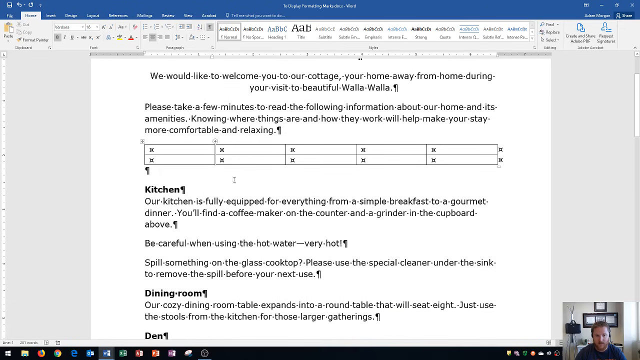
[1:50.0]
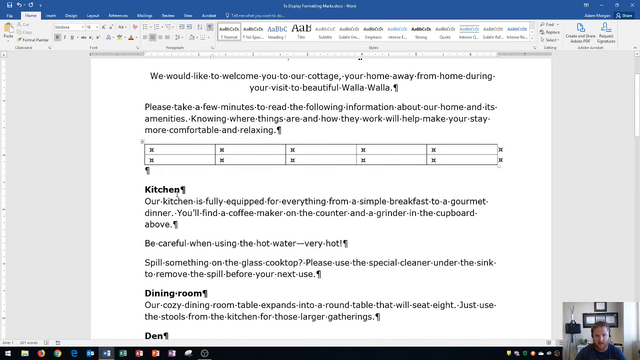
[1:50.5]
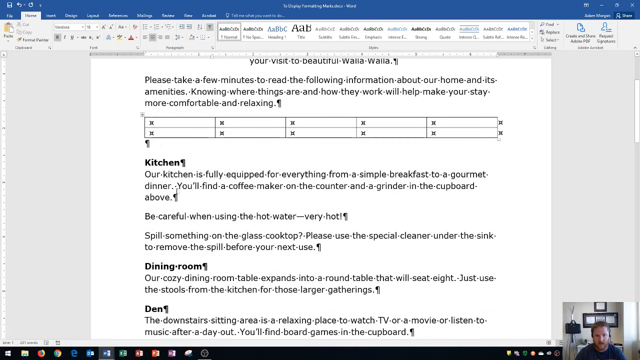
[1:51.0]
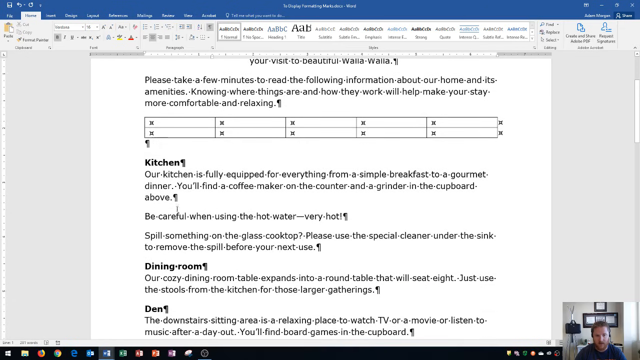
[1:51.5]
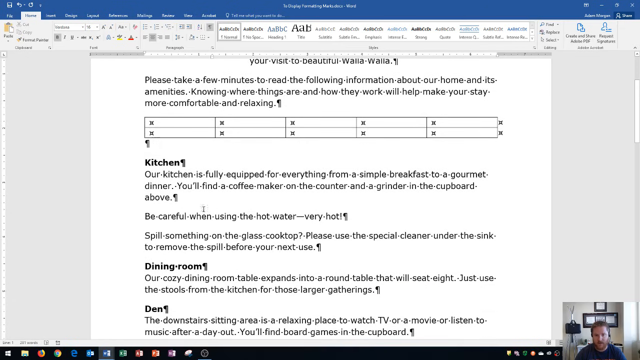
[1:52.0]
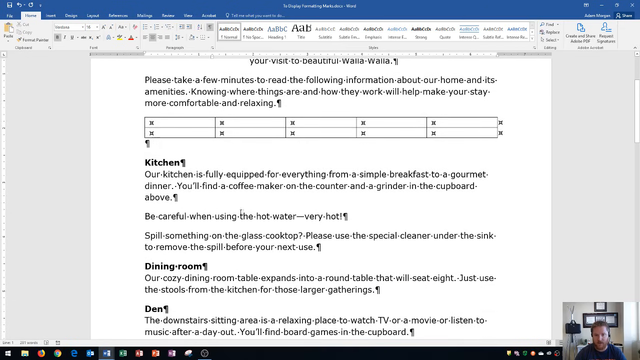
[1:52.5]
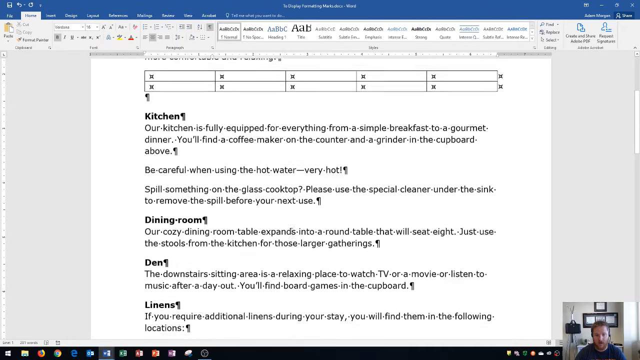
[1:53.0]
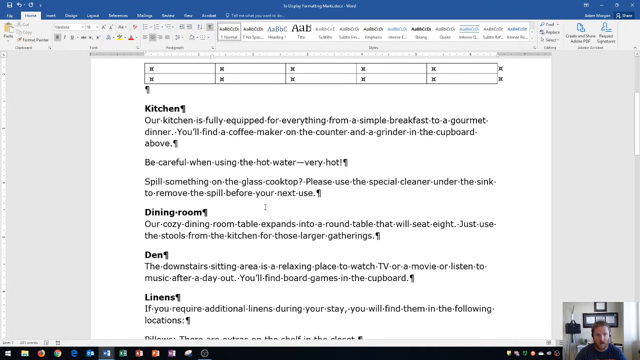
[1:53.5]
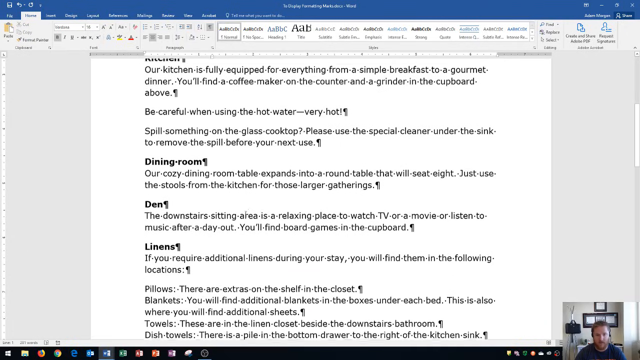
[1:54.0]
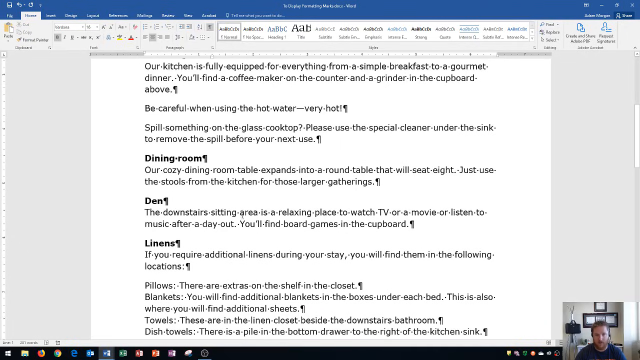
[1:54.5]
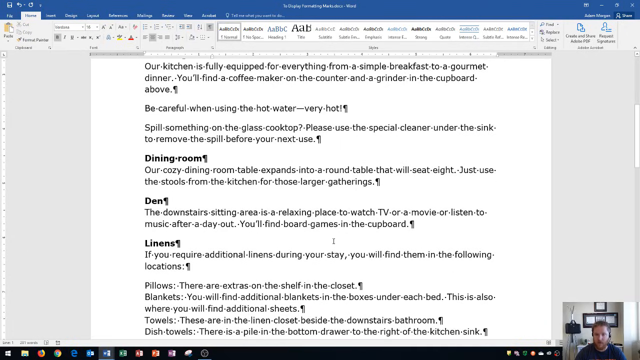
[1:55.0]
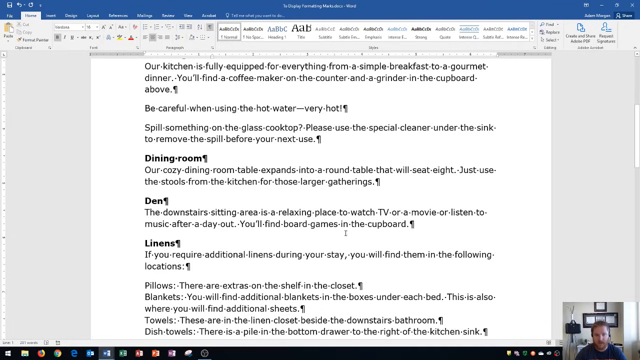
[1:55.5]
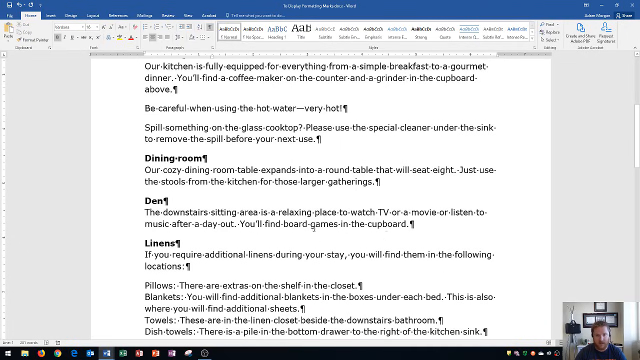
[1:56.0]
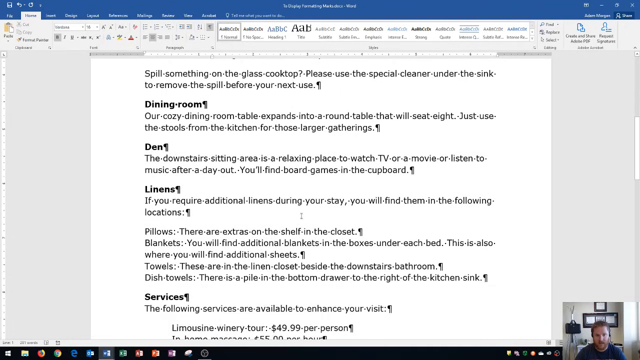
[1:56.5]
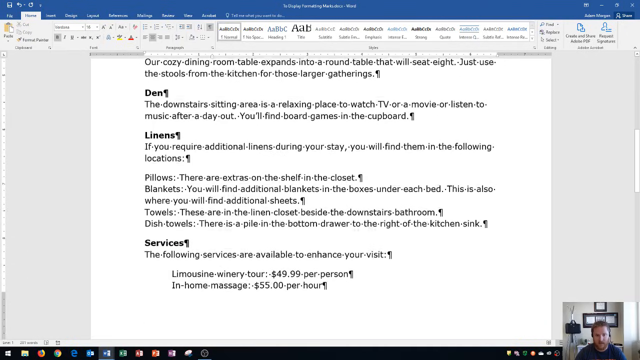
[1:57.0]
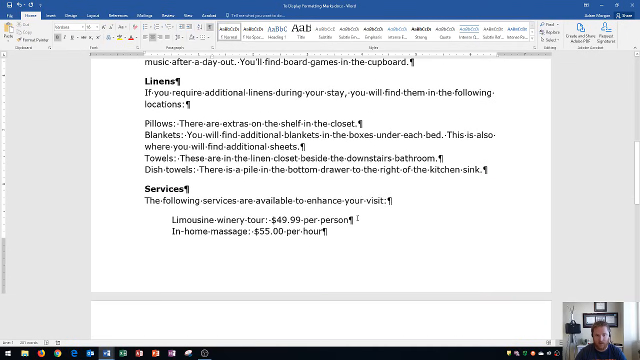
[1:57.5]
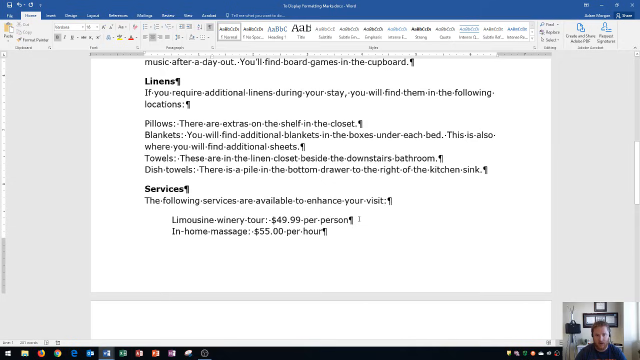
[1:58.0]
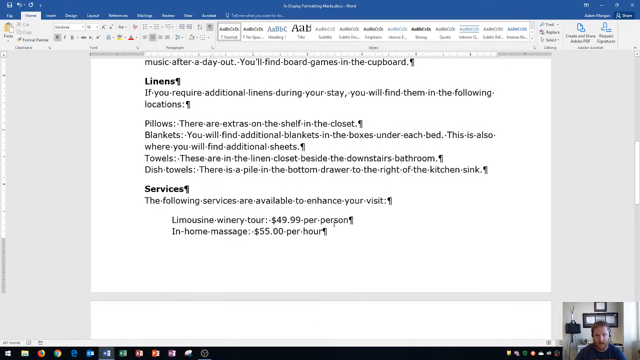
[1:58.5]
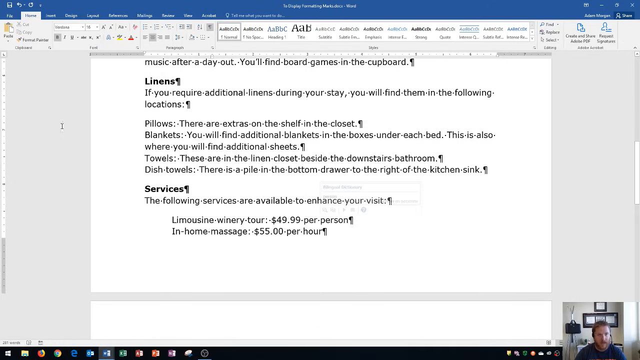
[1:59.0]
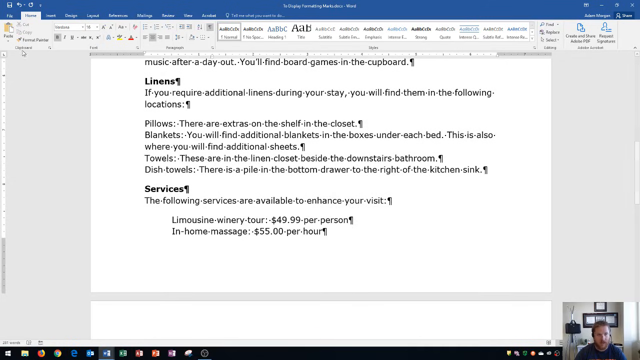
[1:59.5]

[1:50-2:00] The mouse quickly circles over the table, then goes down to the kitchen area and circles it. The page is scrolled down a little and the mouse circles around "dining room", then "den", each from left to right. The page scrolls down further past a section that says "linens" and a bold section that says "services", scrolls more, then goes up to where it says "home". The words now have dots between them. Under kitchen it says "our kitchen is fully equipped for everything from a simple breakfast to a gourmet dinner. You'll find a coffee maker on the counter and a grinder in the cupboard above. Be careful when using hot water- Very hot! Spill something on the glass cooktop? Please use the special cleaner under the sink to remove the spill before your next use." The dining room section says "our cozy dining room table expands into a round table that will seat eight, just use the stools from the kitchen for those larger gatherings." The man is still speaking in the bottom corner of the screen.